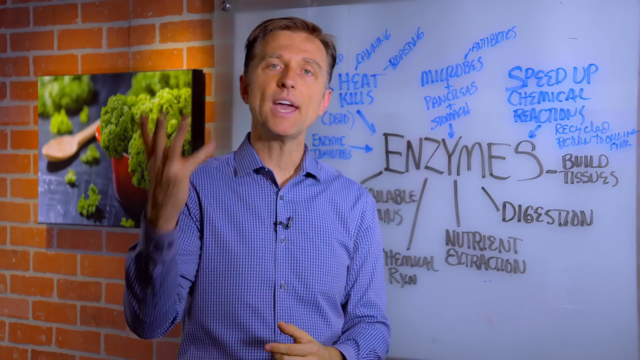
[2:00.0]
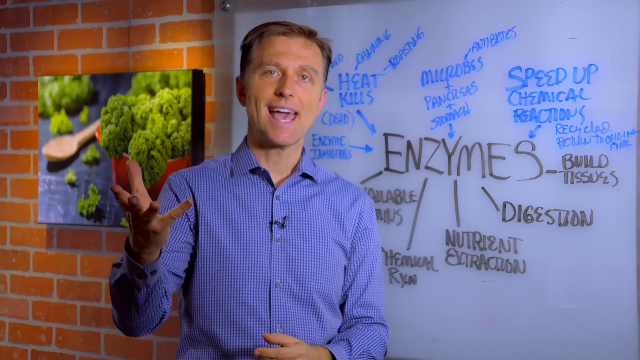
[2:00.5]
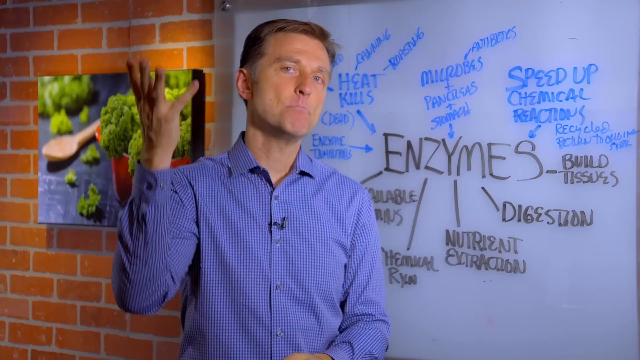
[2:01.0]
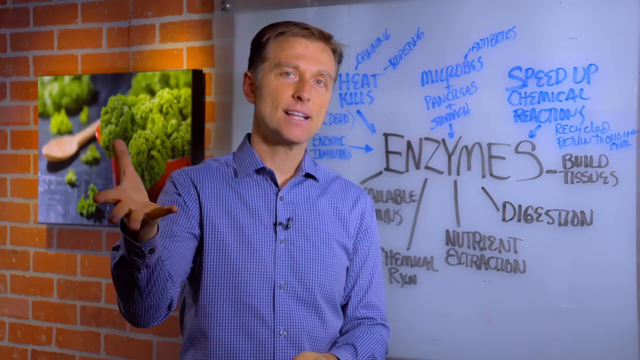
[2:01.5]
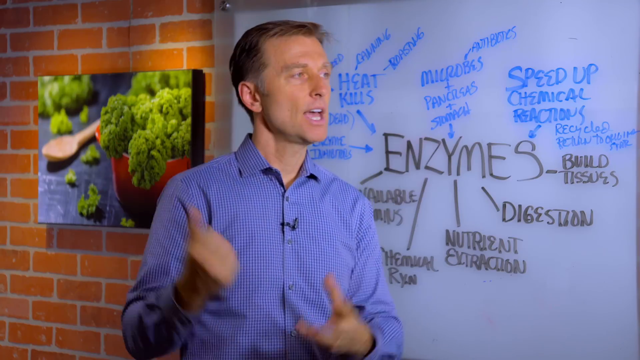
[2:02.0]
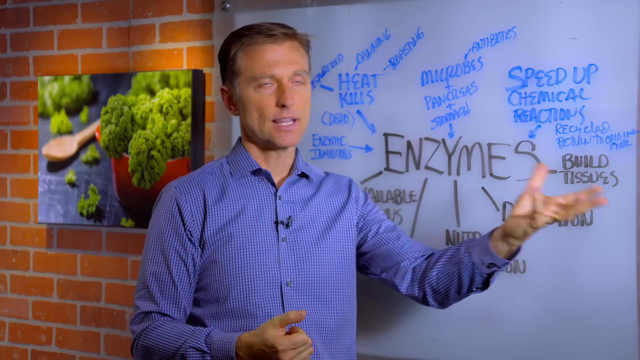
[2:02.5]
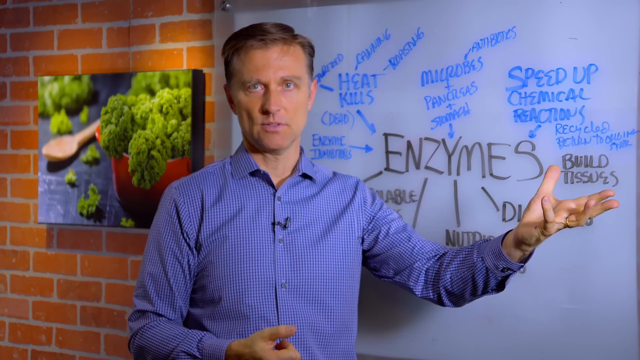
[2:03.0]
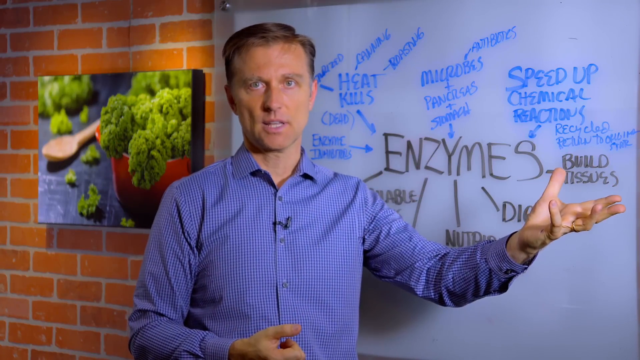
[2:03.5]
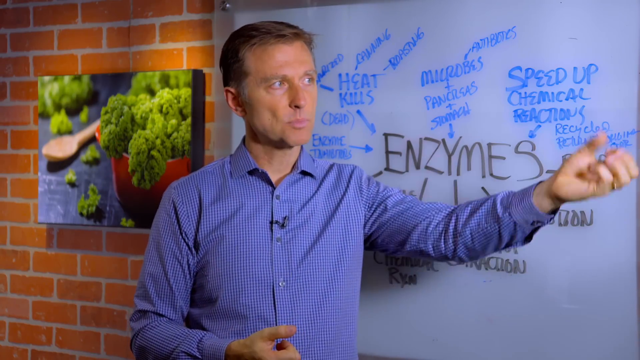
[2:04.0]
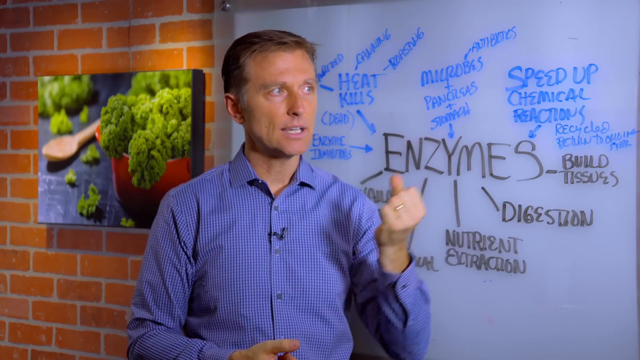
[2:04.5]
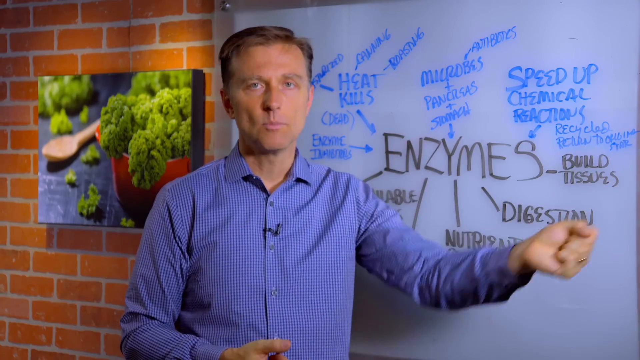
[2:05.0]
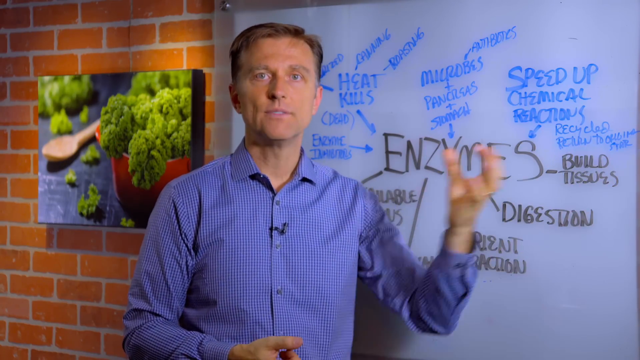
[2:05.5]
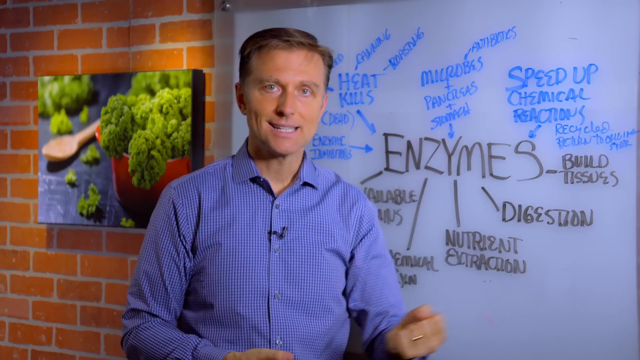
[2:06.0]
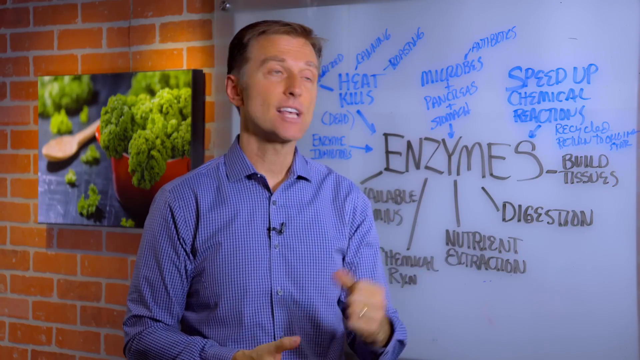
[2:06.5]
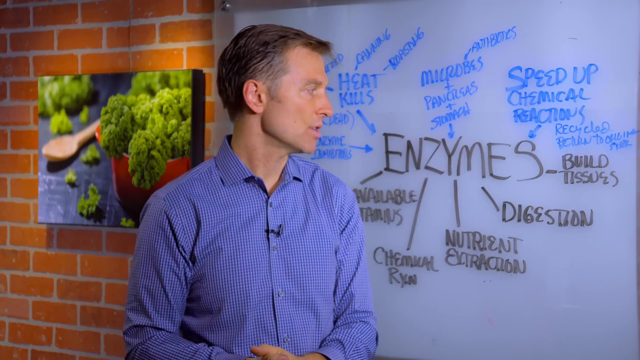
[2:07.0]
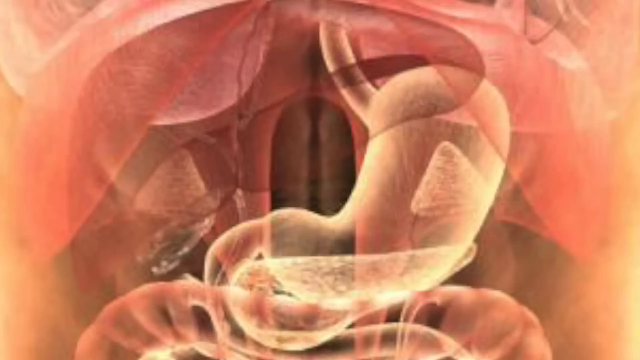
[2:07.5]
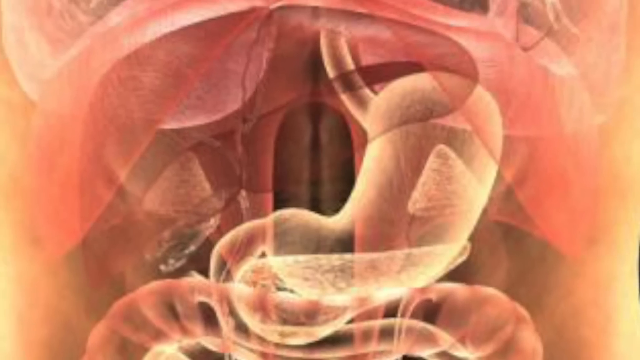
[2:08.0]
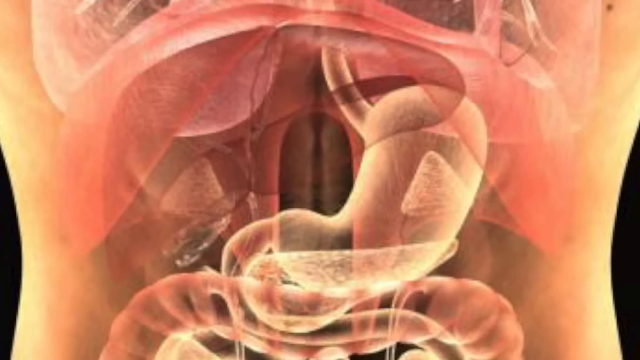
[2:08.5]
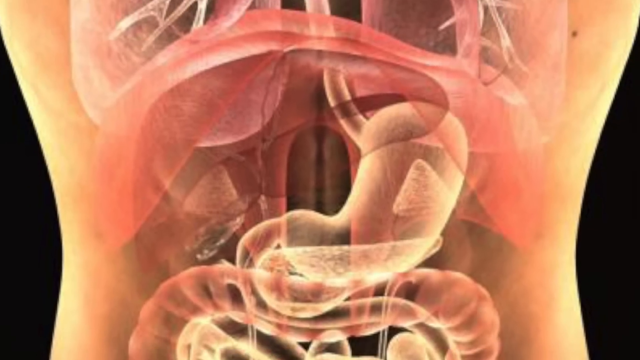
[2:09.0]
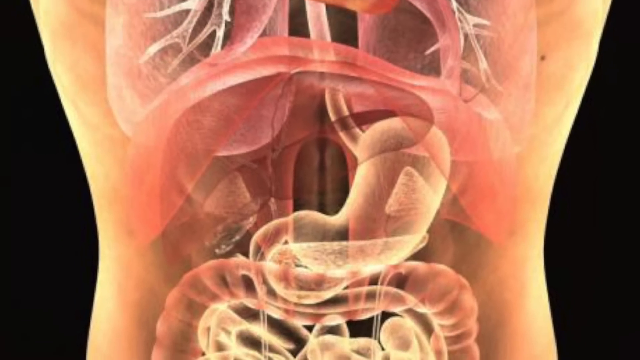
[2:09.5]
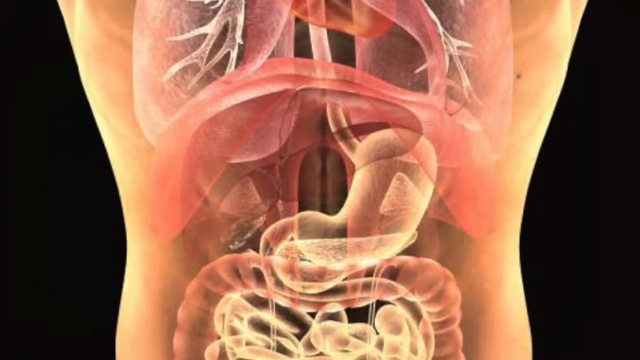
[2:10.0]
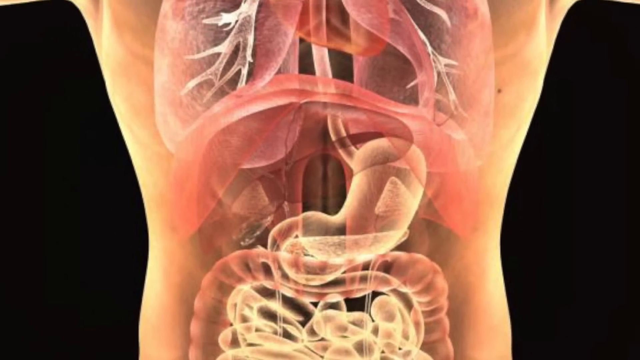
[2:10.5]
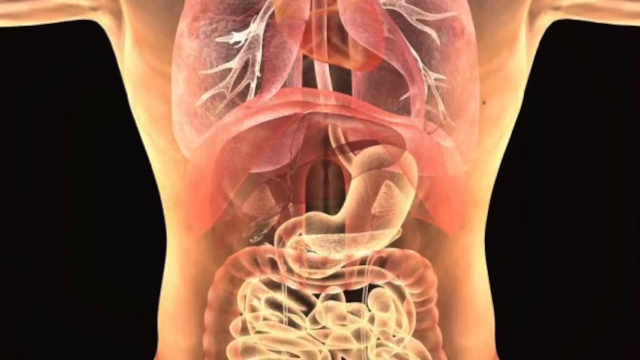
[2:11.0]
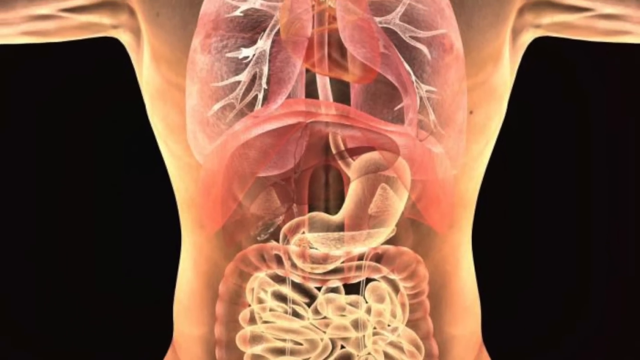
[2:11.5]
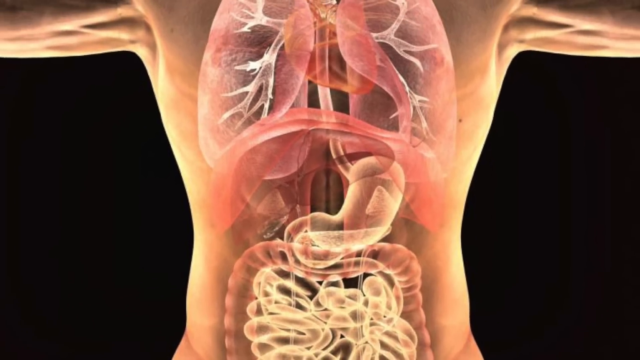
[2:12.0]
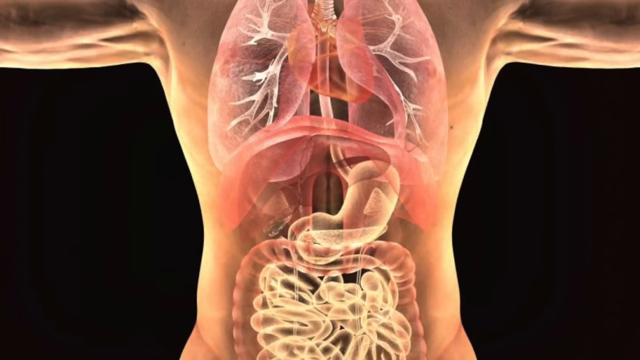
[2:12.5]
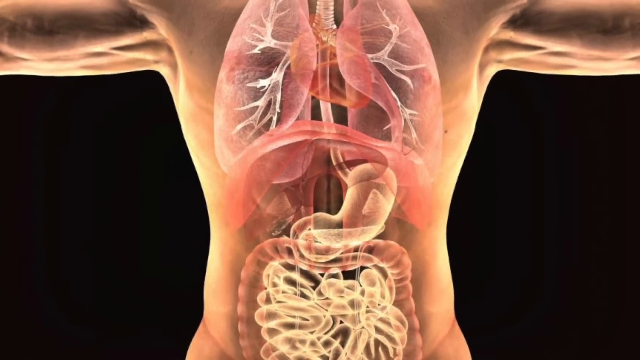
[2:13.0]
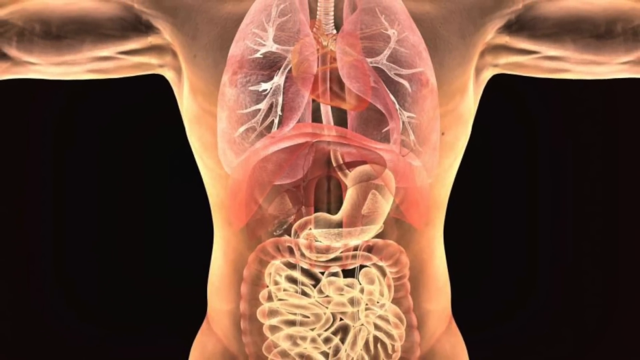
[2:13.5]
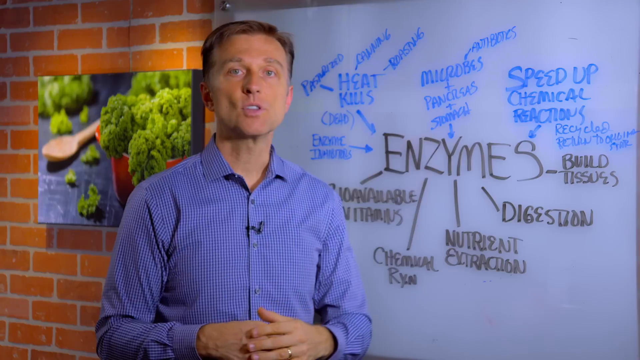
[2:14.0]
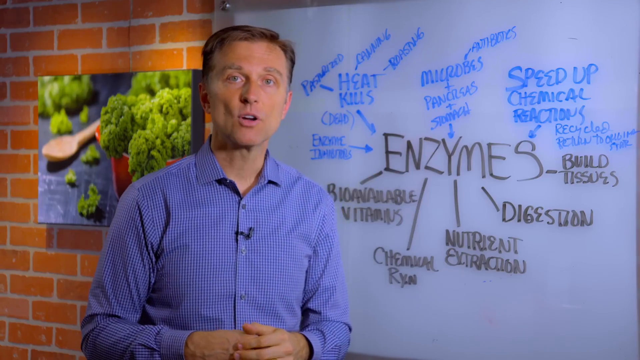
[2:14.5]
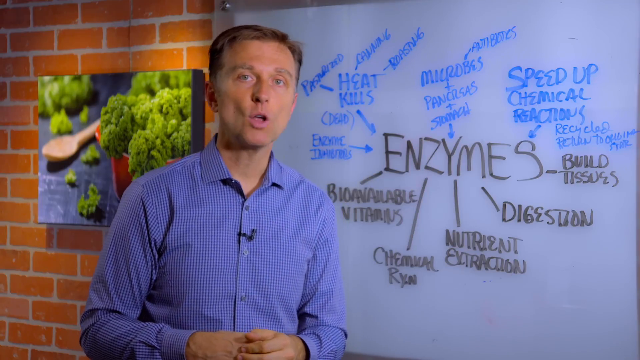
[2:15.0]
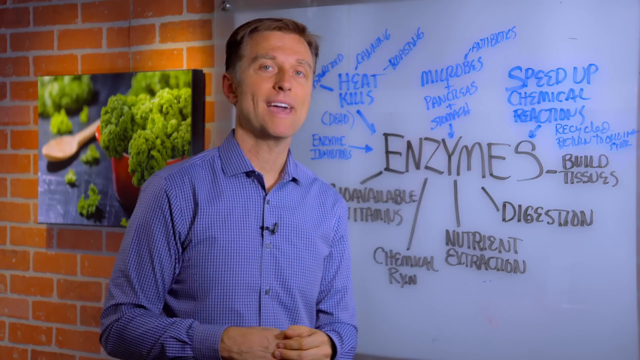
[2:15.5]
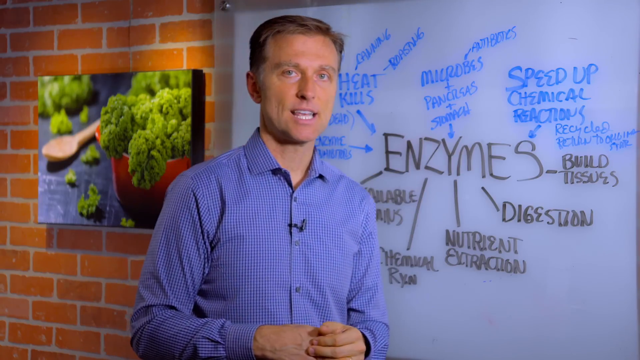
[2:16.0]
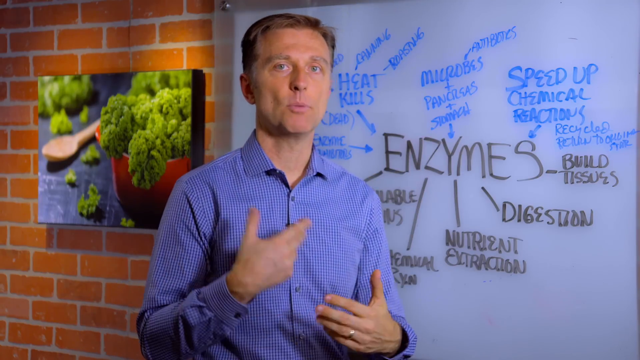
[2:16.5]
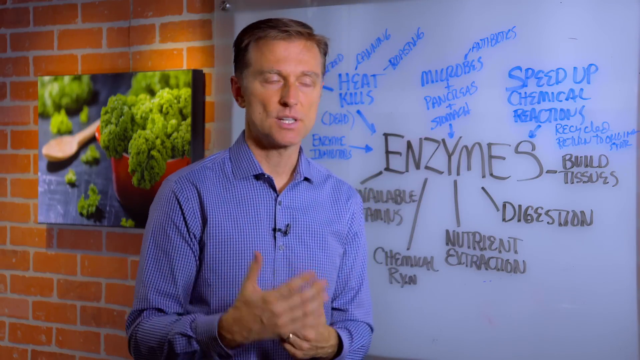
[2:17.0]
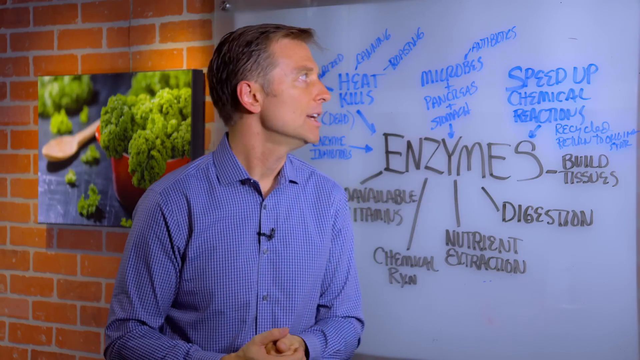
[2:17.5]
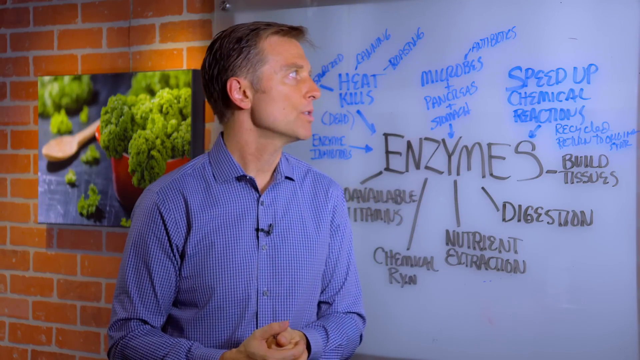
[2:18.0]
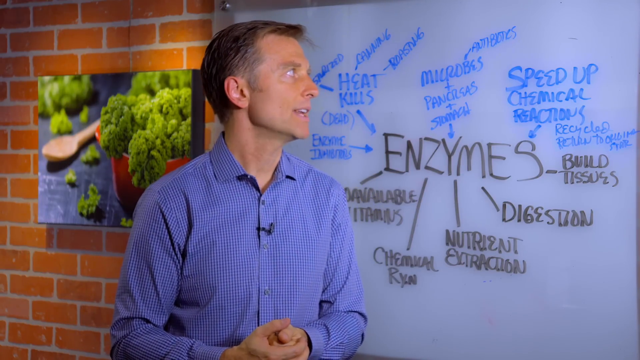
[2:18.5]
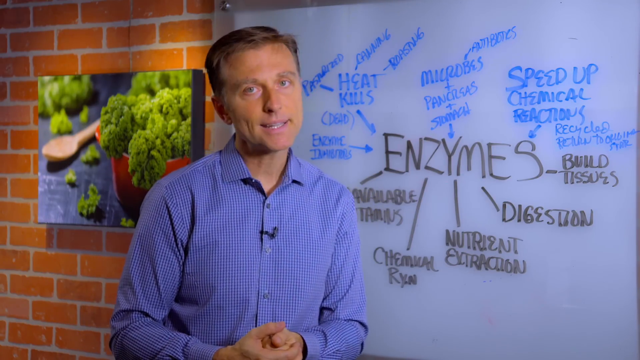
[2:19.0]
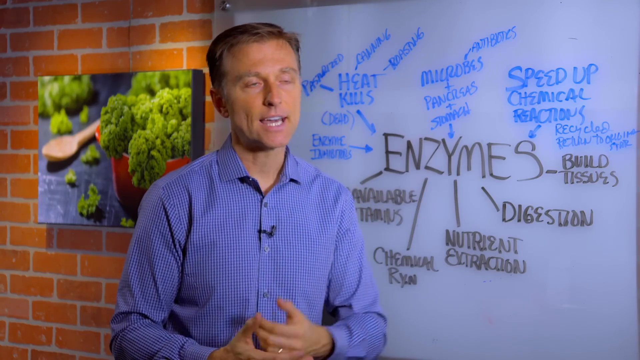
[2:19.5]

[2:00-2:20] Another man holds his hand open, making emphatic hand movements, and then waves with the other hand. He stops for a moment, then moves his hand in sort of a grabbing motion. An image of the inside of the human body then appears, showing different systems: the respiratory system with lungs, the heart, the digestive tract, the pancreas, the kidneys and many other organs.